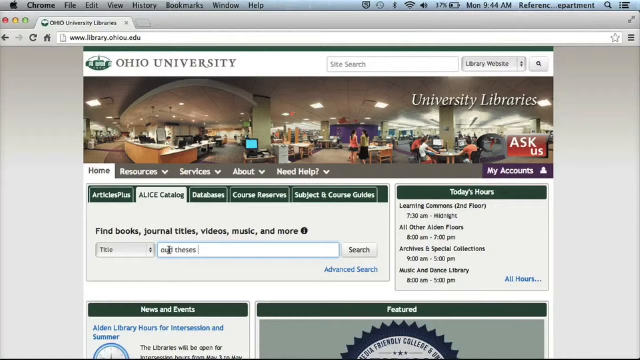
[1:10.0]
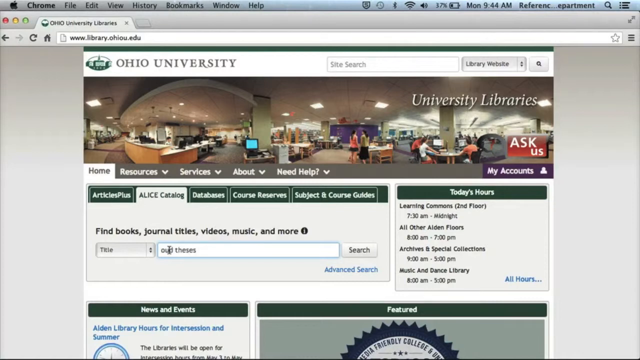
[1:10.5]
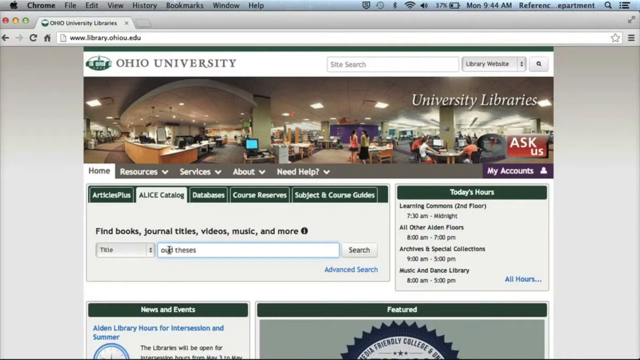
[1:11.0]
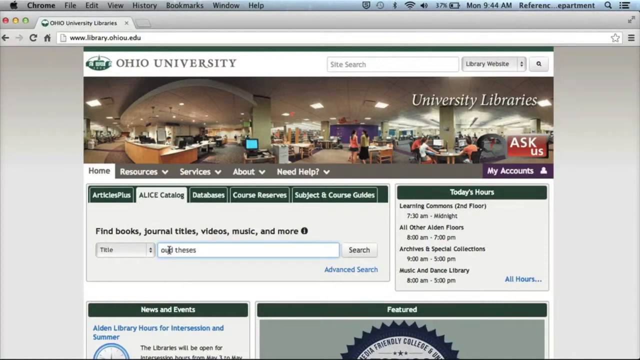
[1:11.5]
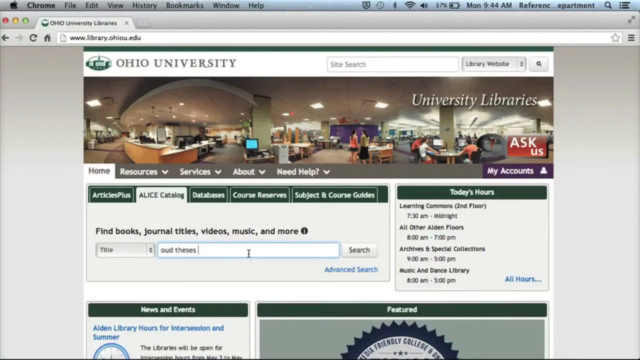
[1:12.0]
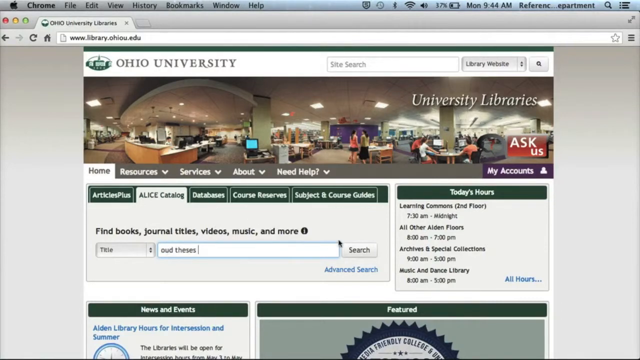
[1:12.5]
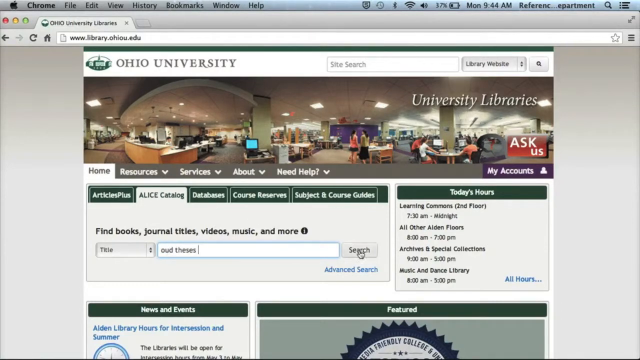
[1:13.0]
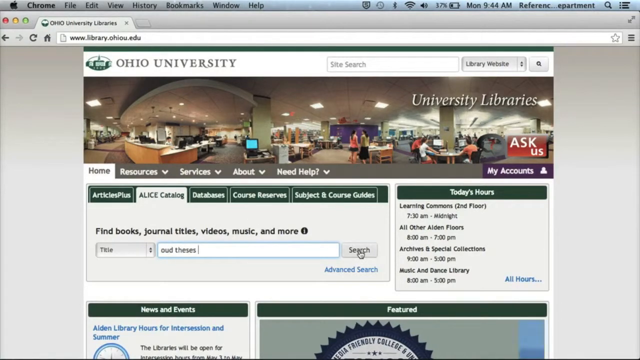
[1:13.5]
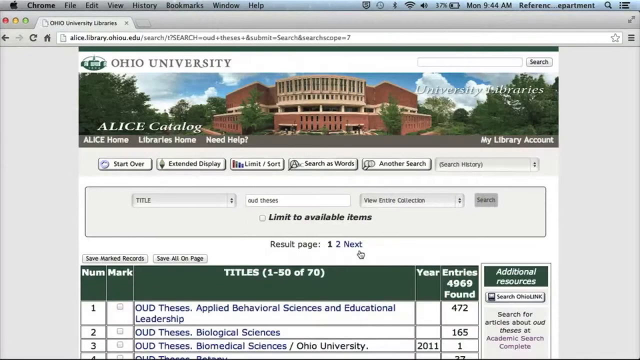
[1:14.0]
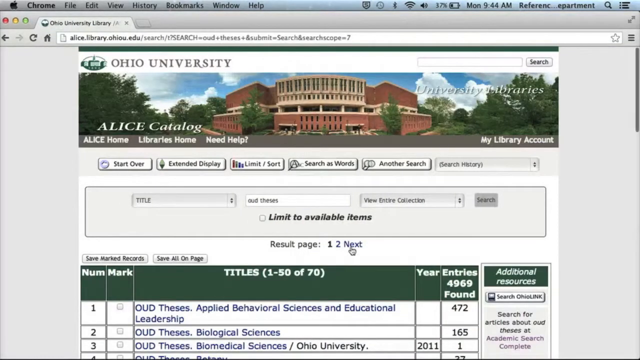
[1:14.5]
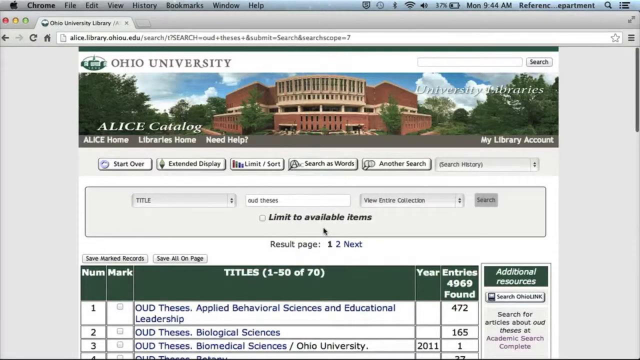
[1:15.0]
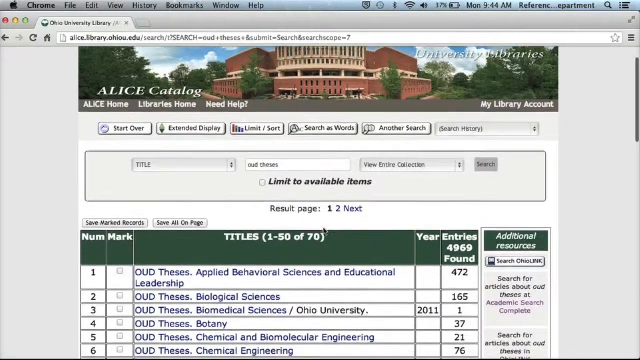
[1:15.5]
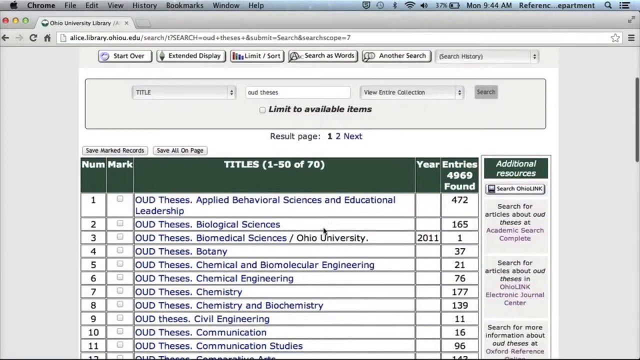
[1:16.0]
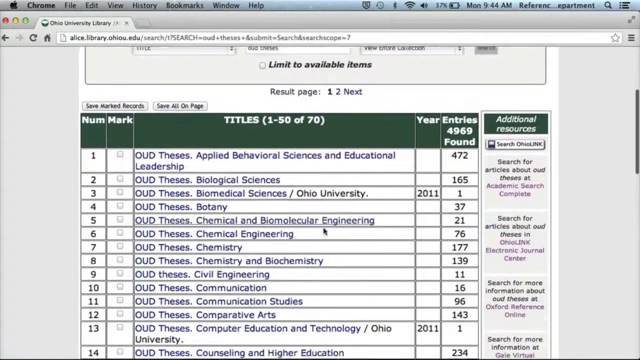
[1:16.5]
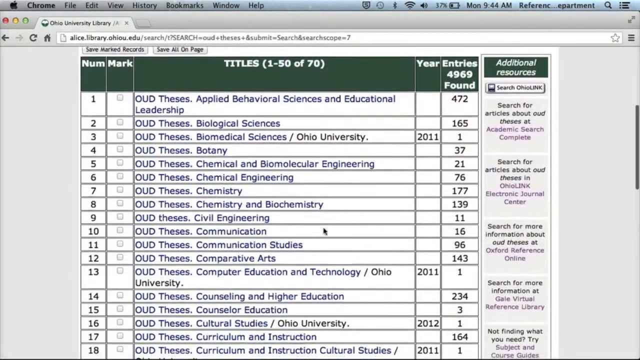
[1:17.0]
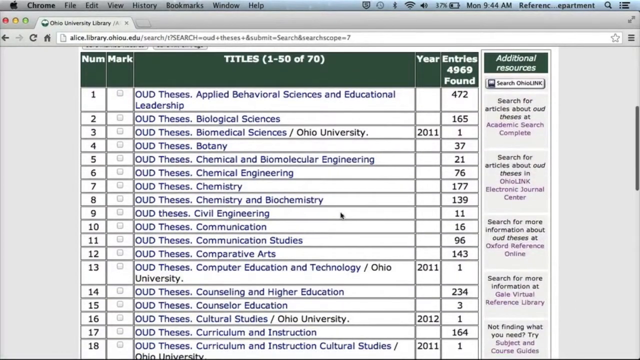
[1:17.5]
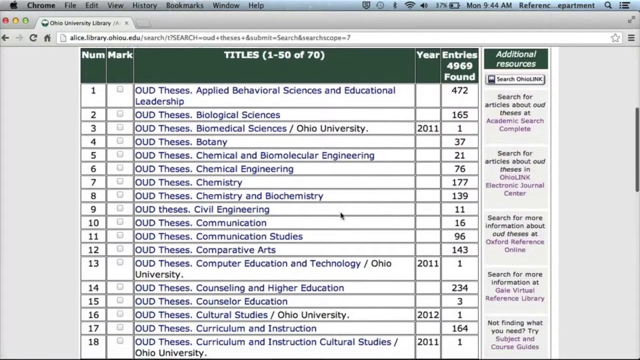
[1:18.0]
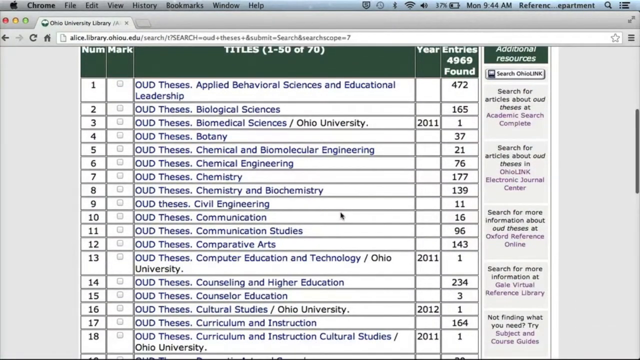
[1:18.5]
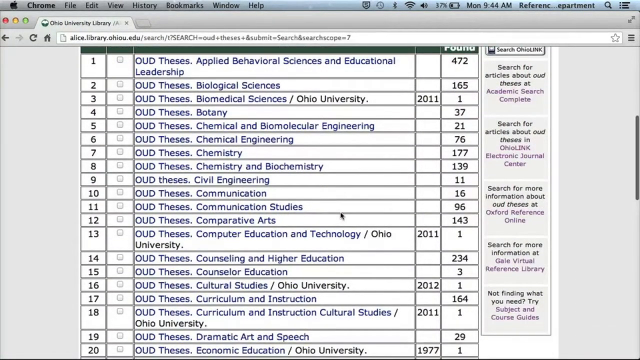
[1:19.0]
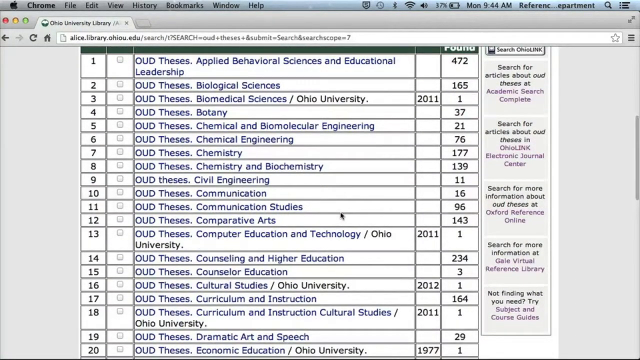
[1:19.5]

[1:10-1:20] The letters typed in the search bar appear to be an O, an unreadable letter, a D, a space, and "THESES" followed by a space. The mouse moves to the search button and presses it, leading to a new webpage with a table of several titles called "OUD theses." The page scrolls down to show the rest of the table's contents. Items 1 through 50 appear to be displayed, out of what appears to be a total of 70, and the bottom of the table is not completely visible.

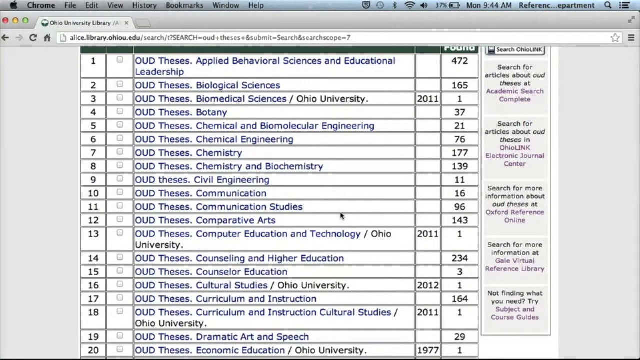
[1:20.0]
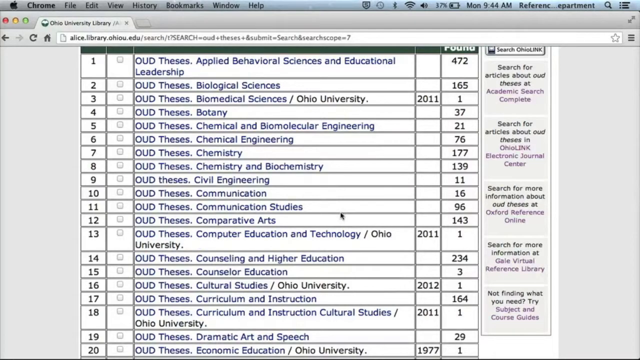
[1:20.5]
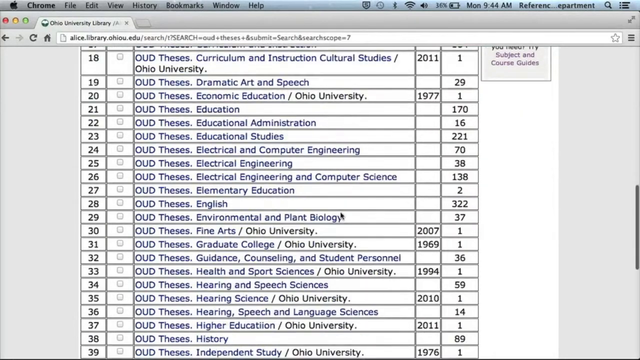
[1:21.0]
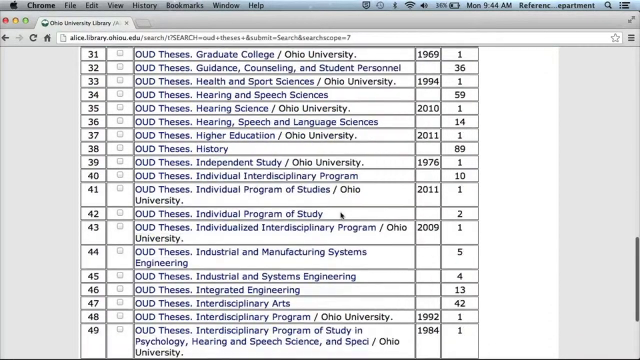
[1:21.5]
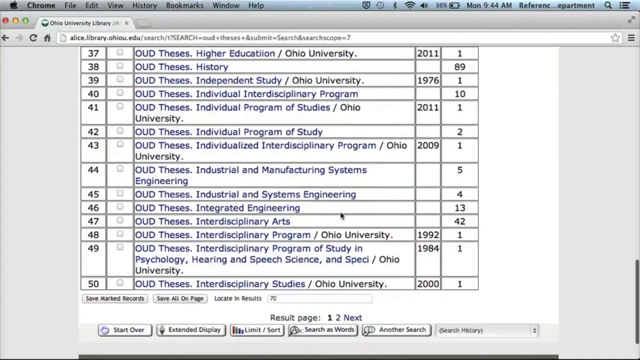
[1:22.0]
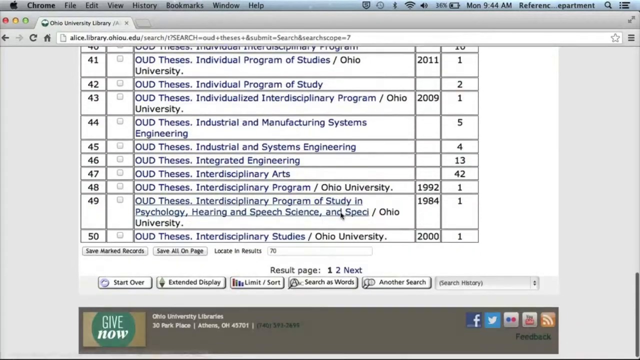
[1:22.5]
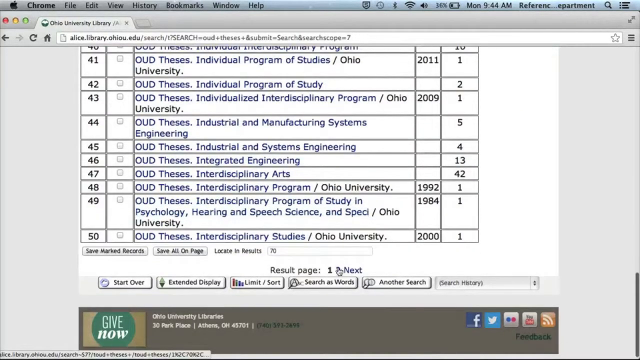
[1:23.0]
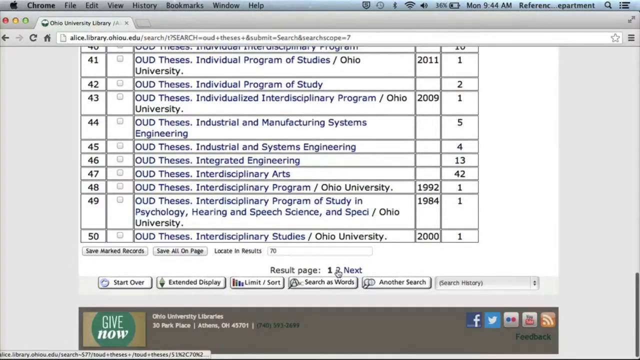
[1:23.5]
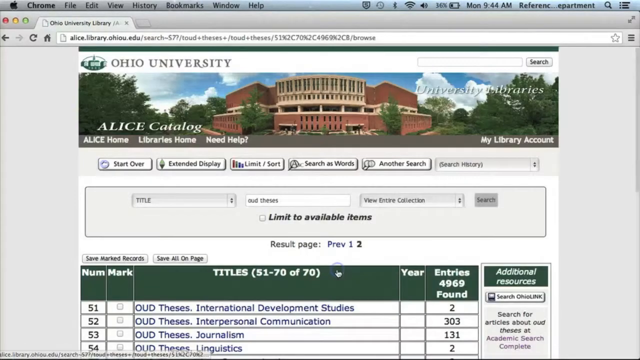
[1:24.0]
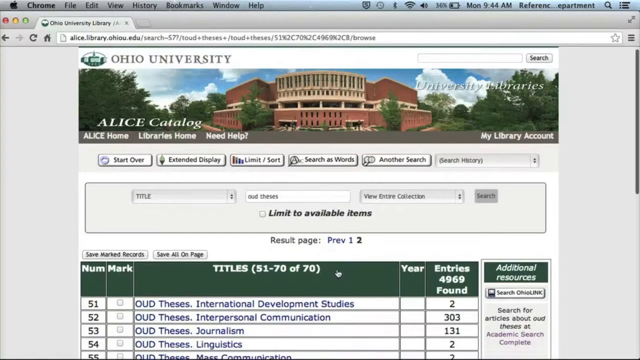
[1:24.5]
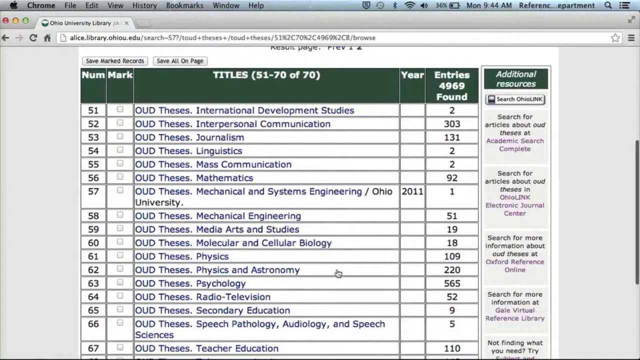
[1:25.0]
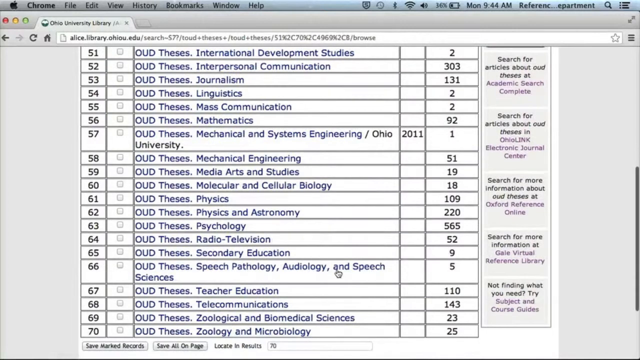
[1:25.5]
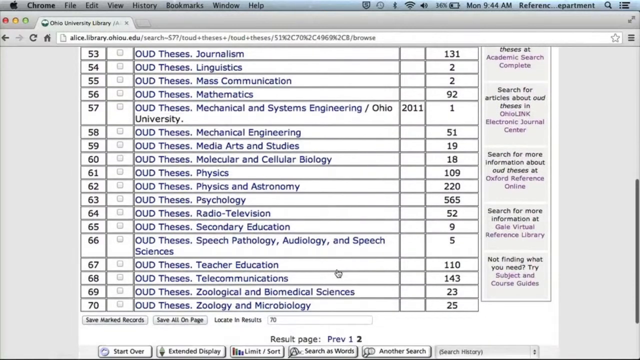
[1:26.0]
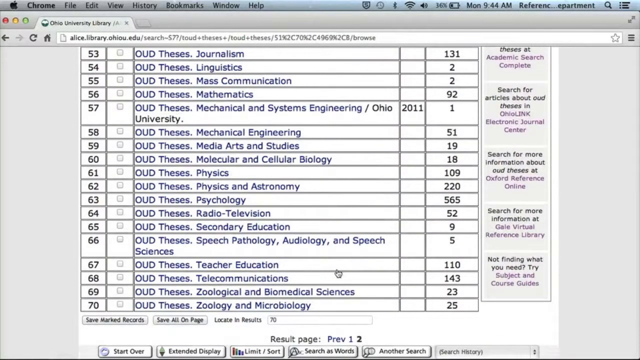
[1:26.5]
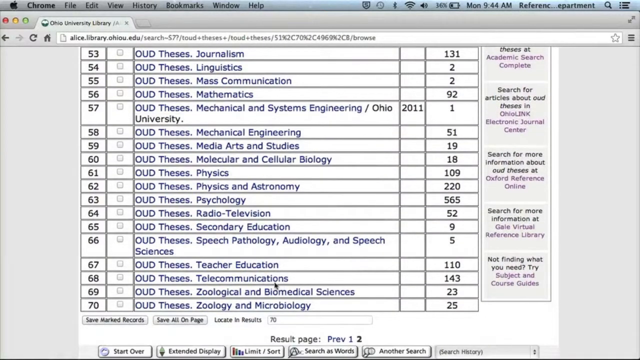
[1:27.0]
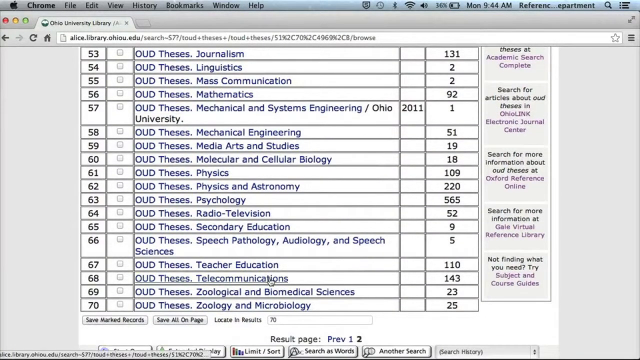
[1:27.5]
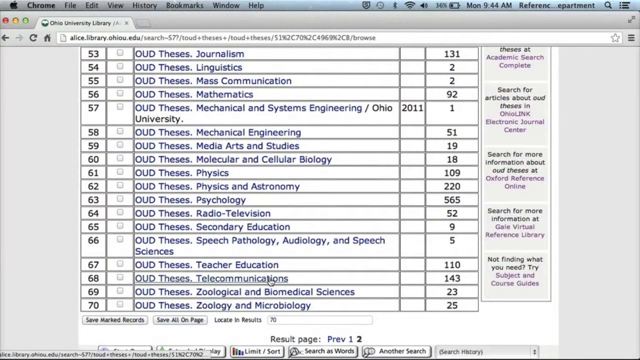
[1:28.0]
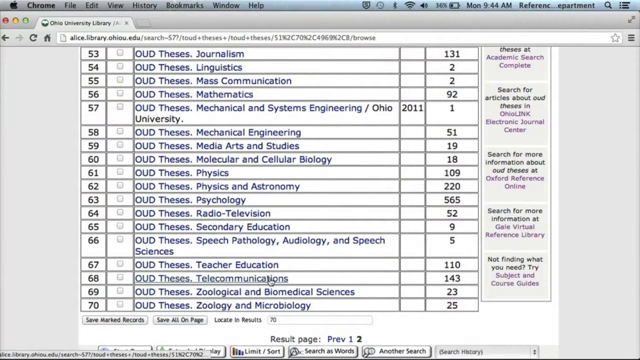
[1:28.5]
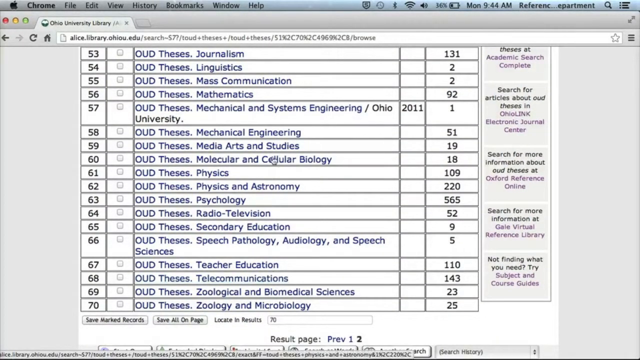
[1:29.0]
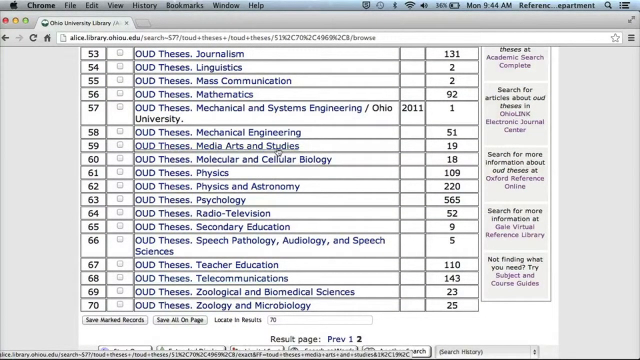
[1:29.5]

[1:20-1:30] Scrolling continues to the bottom of the table, which ends at line 50. The mouse clicks a blue clickable link reading "2" beside text reading "results page," opening the second page: another table like the previous one, this time reading "titles 51 through 70 of 70." The page scrolls to show the table running from 51 to 70. The mouse moves to line 59 and hovers over a clickable link reading "OUD theses, media arts, and studies."